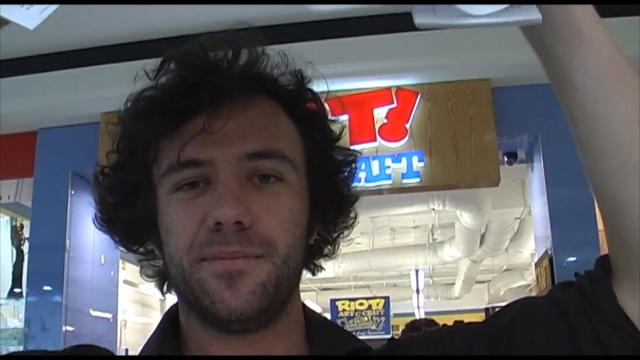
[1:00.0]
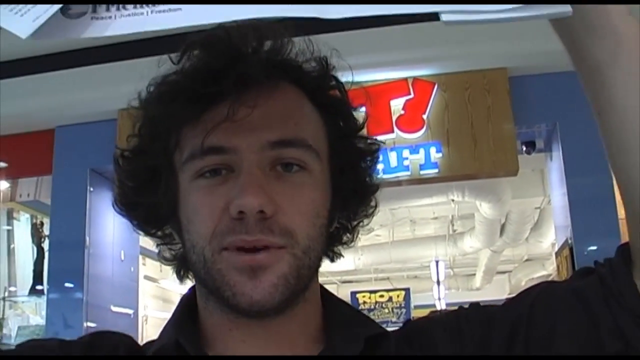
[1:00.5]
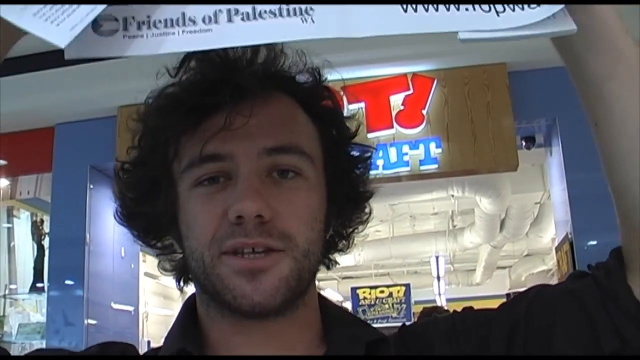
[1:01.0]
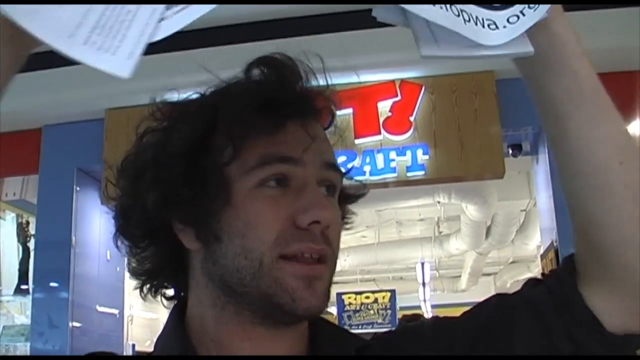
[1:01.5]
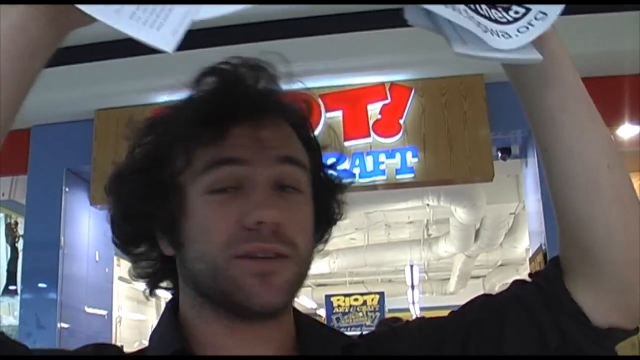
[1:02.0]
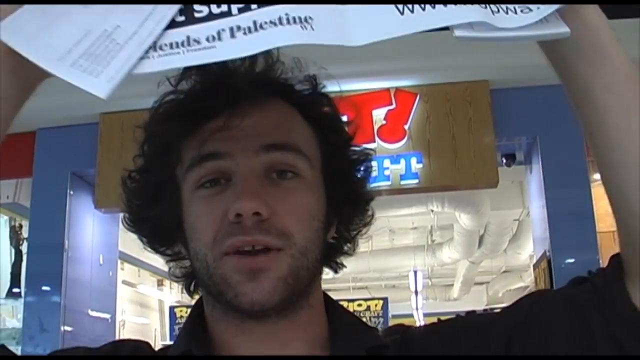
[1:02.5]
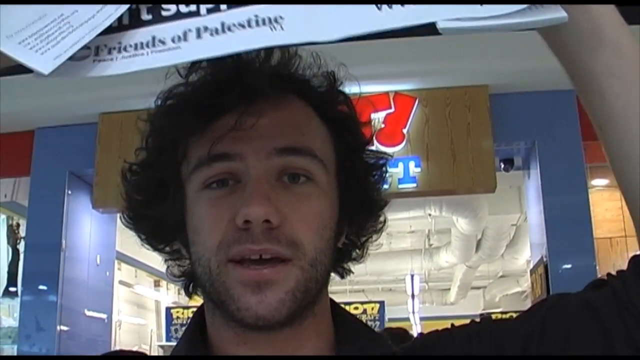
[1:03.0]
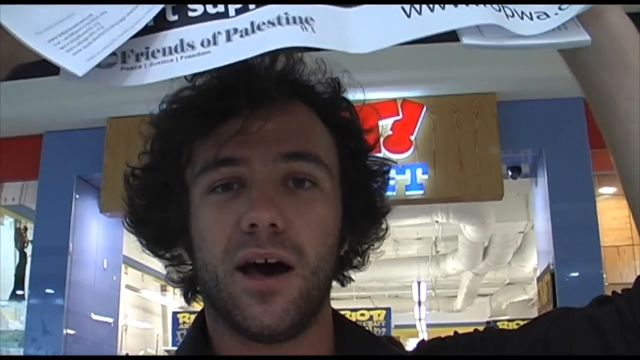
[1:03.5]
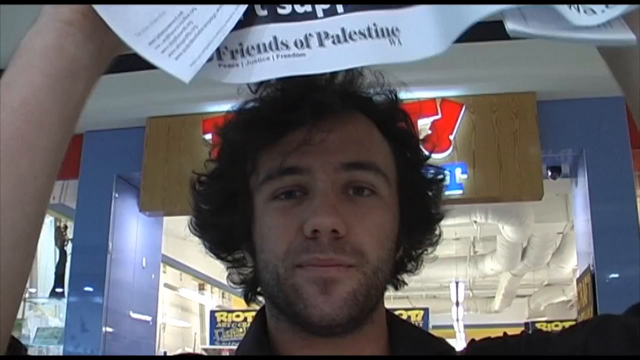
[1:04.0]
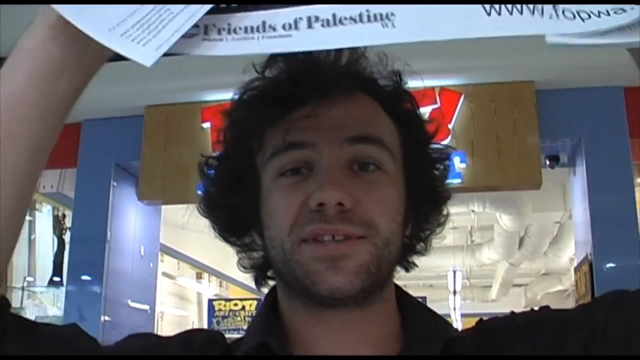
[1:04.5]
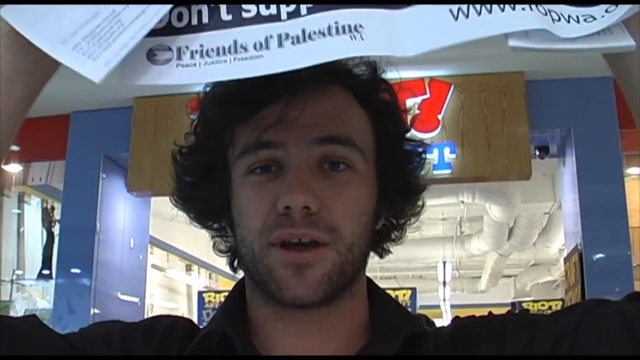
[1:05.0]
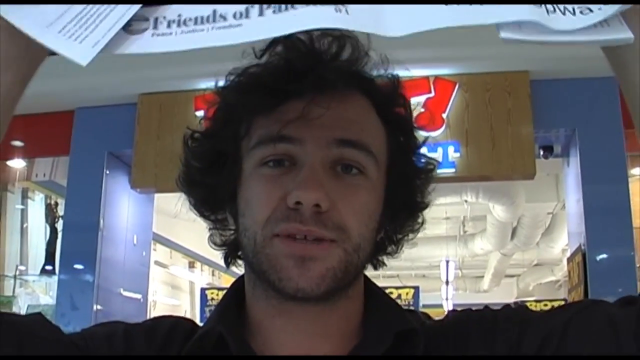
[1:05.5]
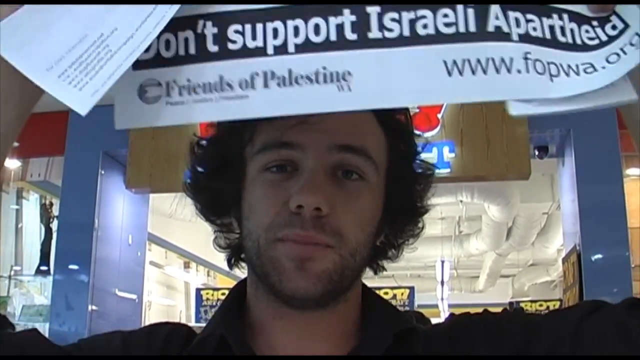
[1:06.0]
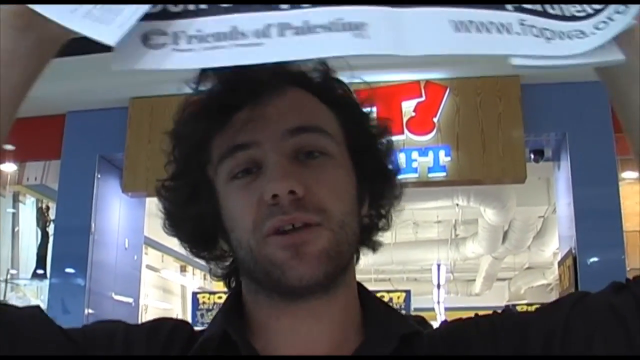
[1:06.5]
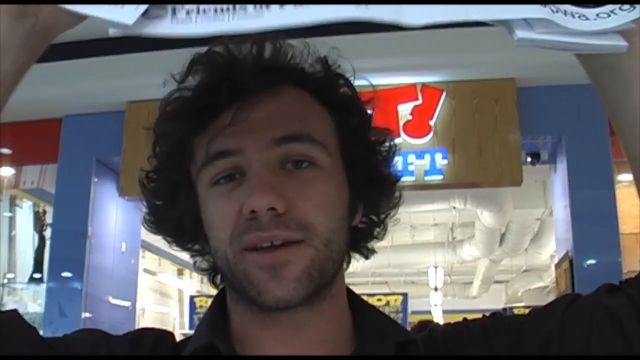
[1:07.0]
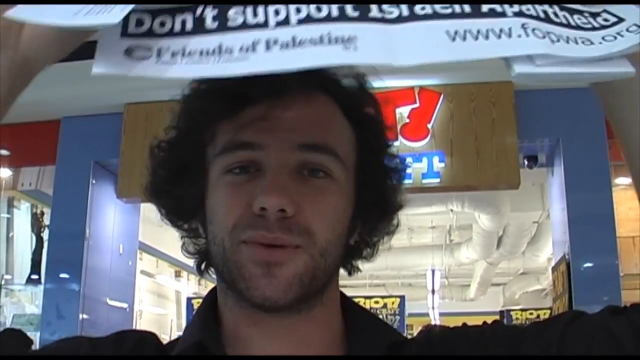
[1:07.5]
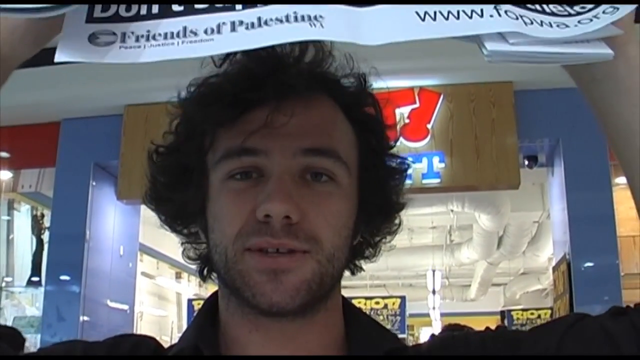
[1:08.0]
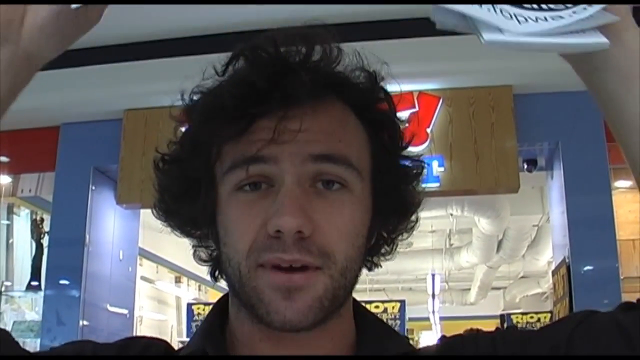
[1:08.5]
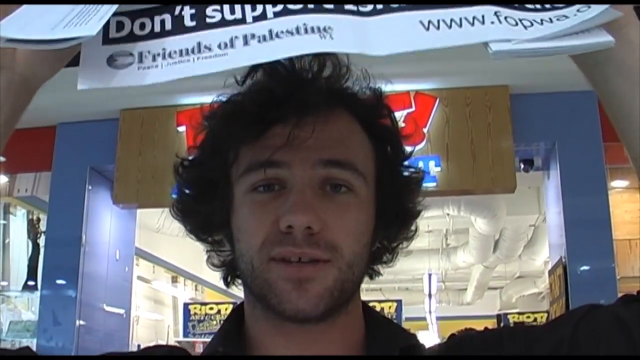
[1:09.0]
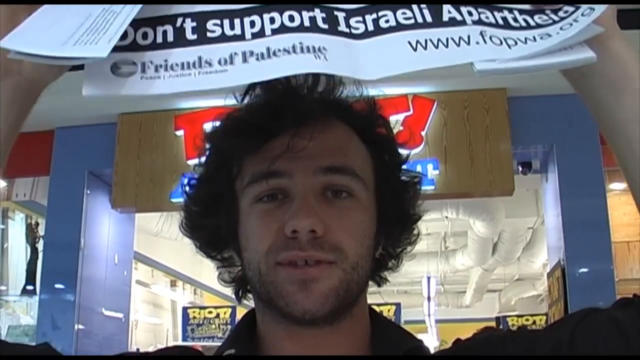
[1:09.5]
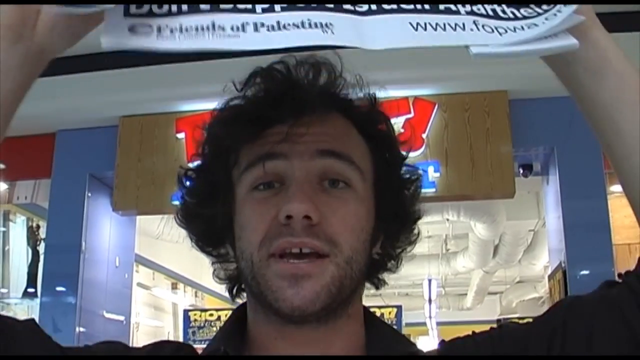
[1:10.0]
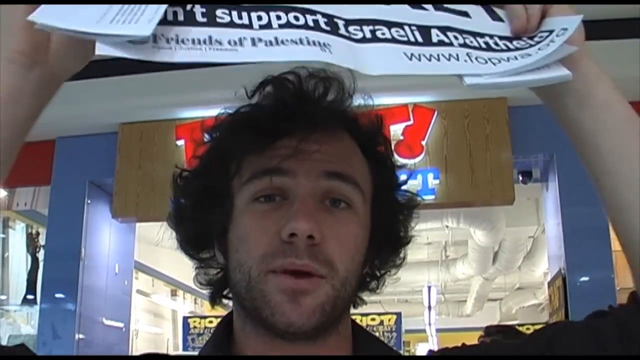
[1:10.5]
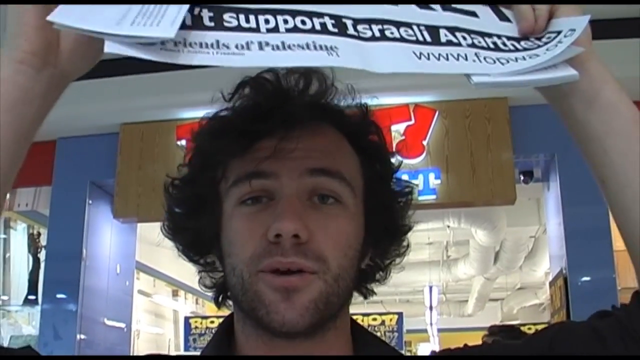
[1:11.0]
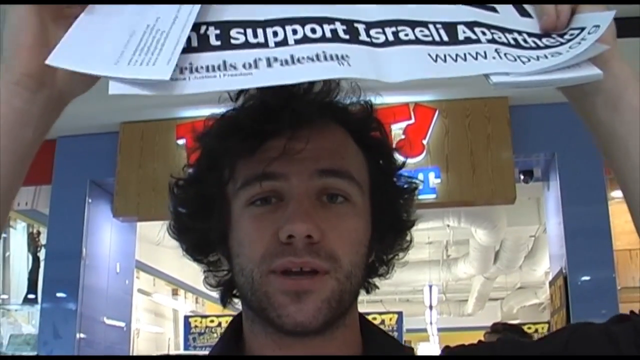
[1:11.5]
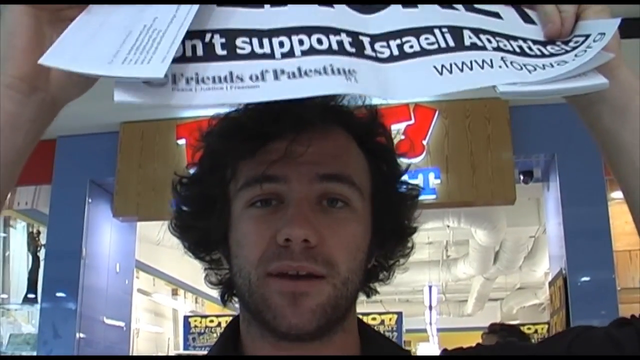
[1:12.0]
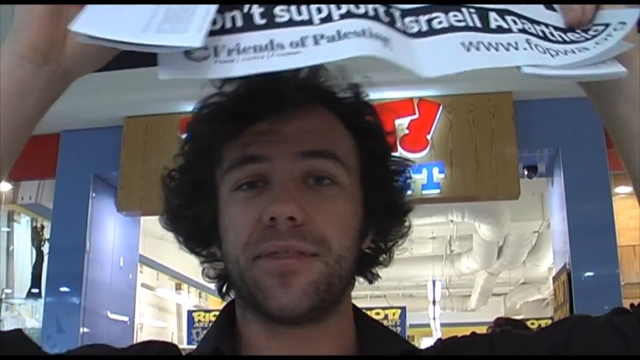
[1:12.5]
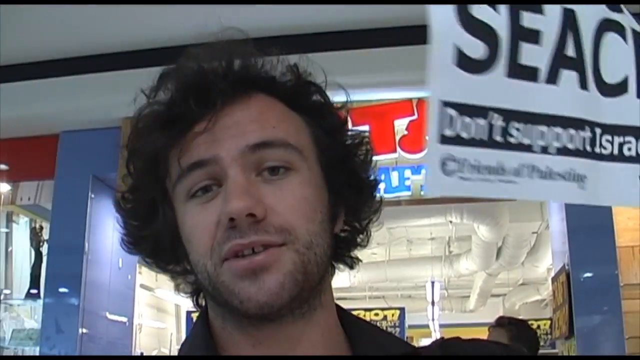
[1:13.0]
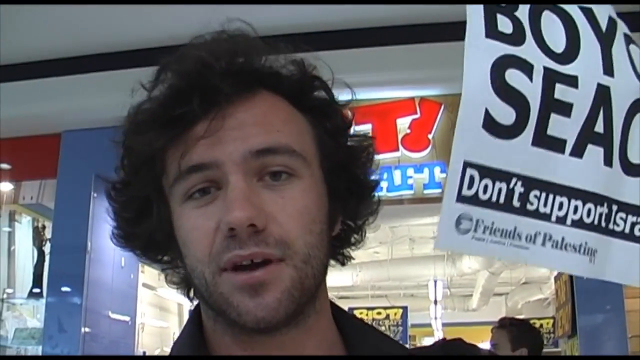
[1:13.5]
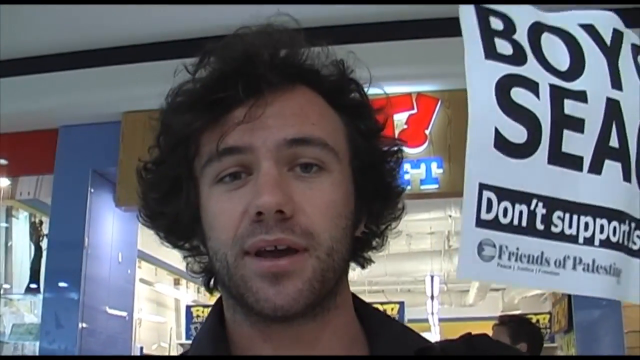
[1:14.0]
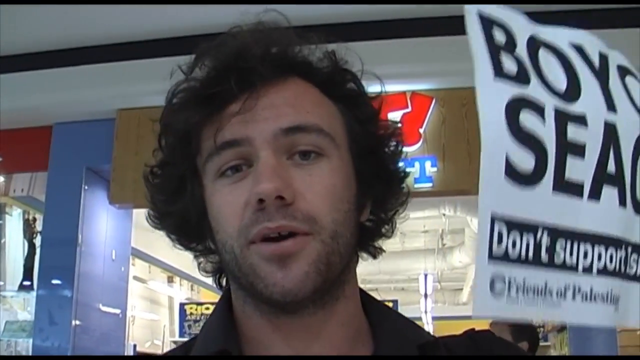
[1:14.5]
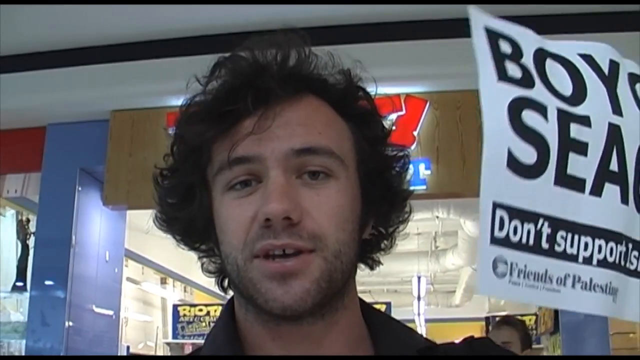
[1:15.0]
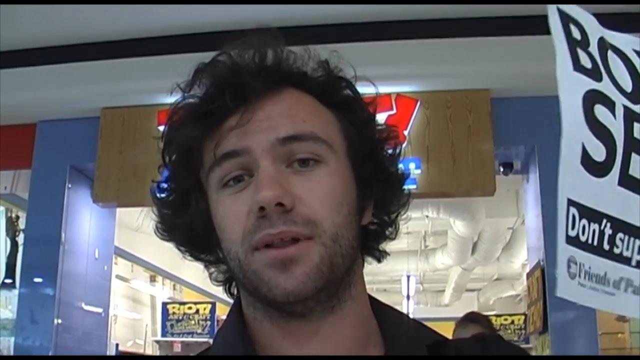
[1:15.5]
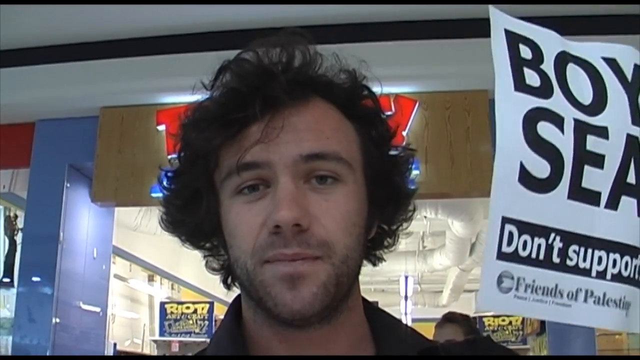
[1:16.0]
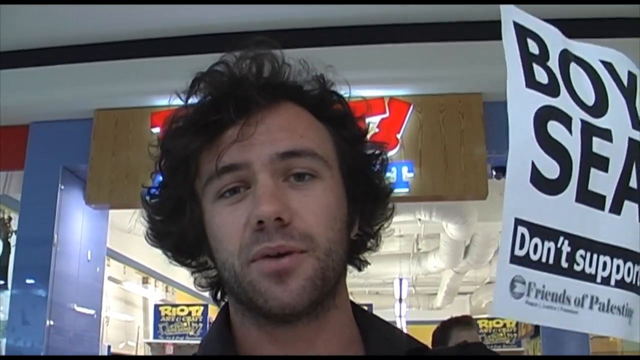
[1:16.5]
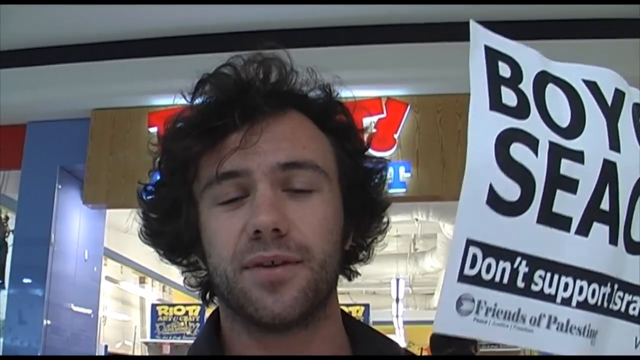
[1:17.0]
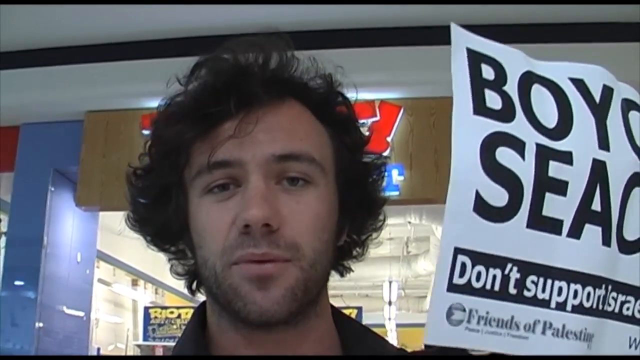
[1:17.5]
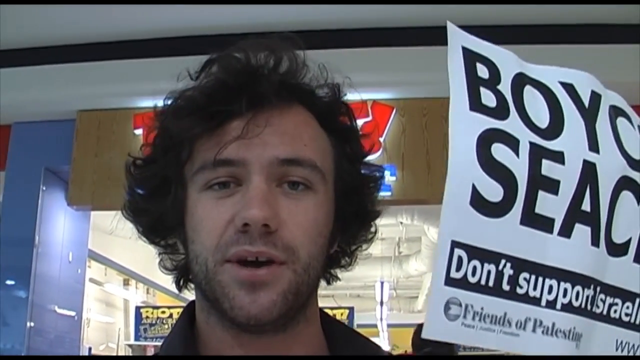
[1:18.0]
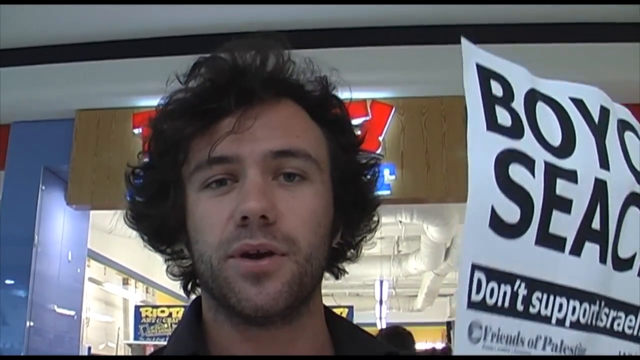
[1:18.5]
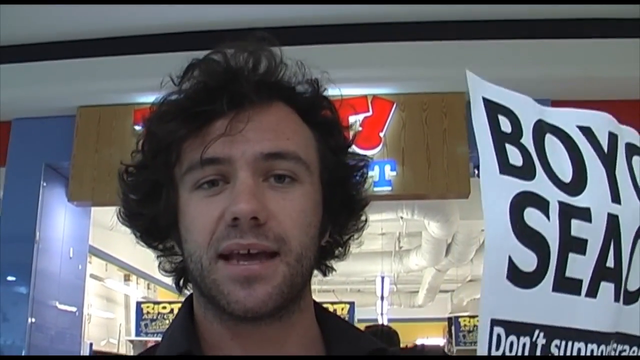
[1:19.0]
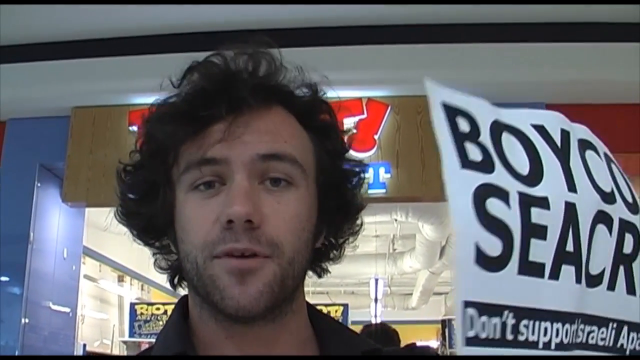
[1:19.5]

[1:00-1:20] The small protest is against what the signs call Israeli apartheid, and it appears to be organized by Friends of Palestine; a website for Friends of Palestine is shown. The young man with a scraggly brunette beard talks to the camera, his head blocking the name of the store he is standing in front of.